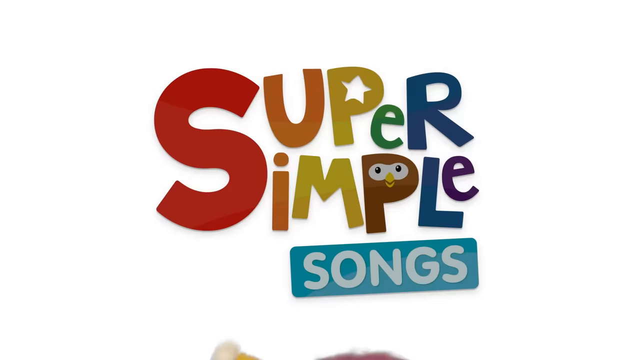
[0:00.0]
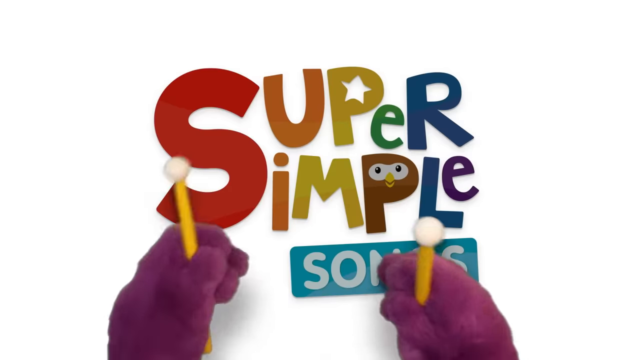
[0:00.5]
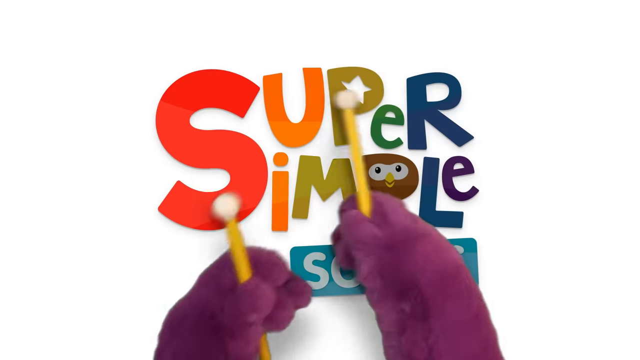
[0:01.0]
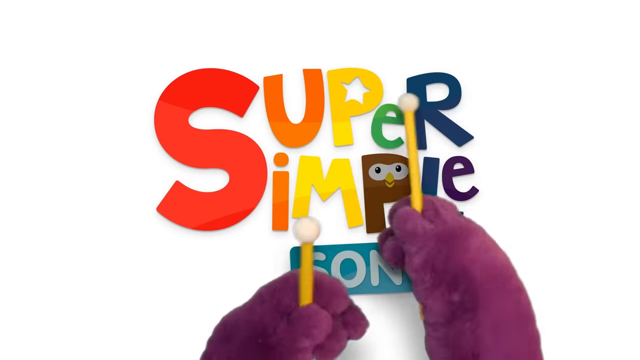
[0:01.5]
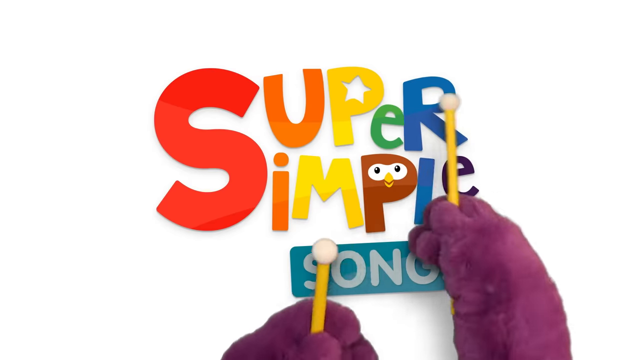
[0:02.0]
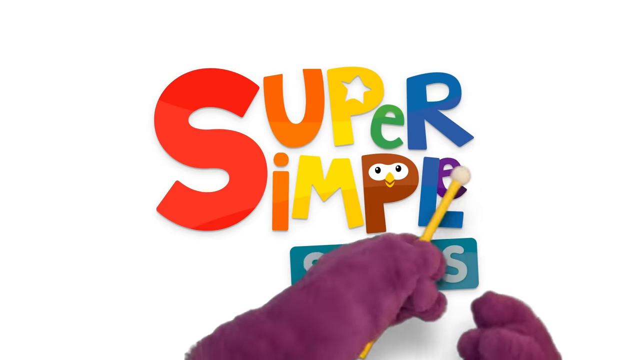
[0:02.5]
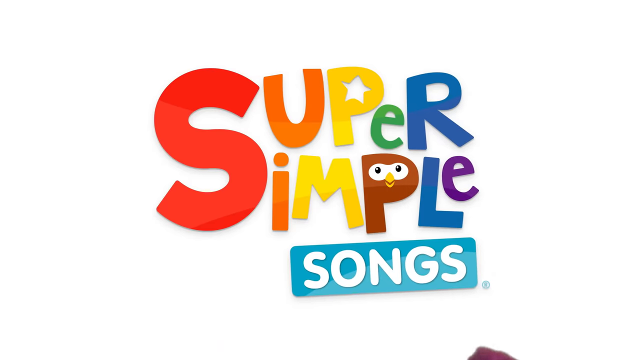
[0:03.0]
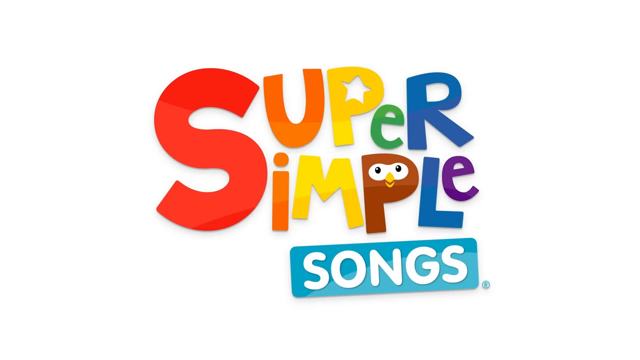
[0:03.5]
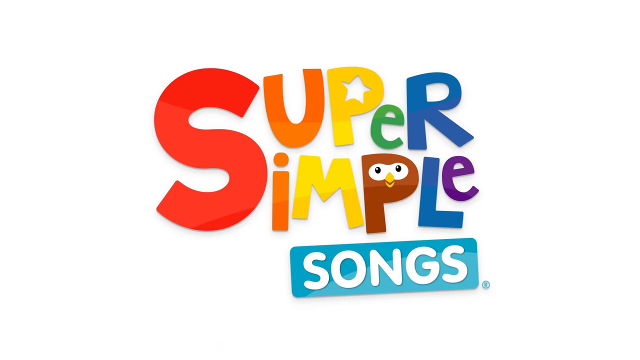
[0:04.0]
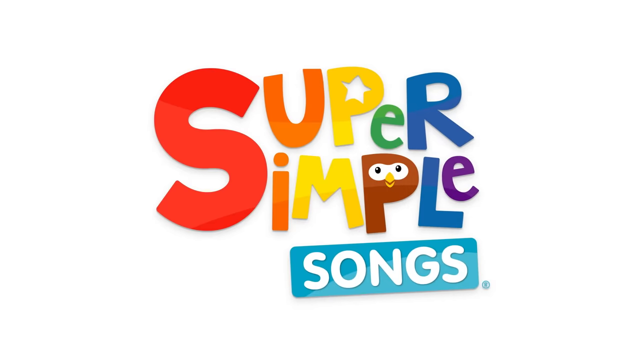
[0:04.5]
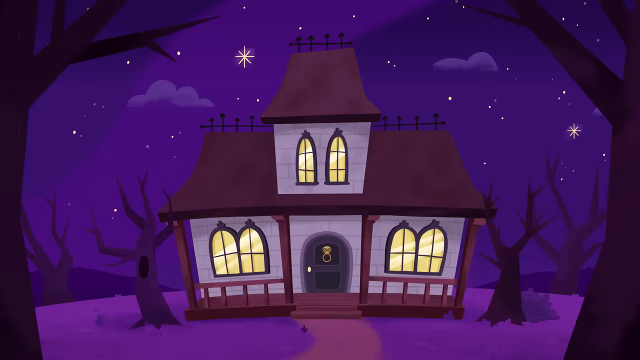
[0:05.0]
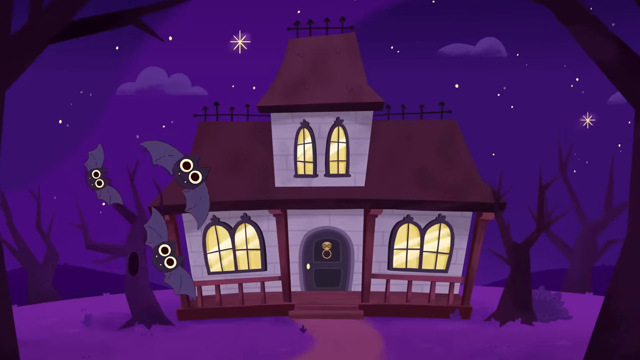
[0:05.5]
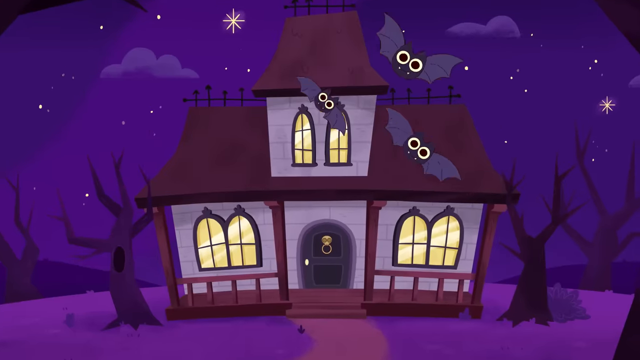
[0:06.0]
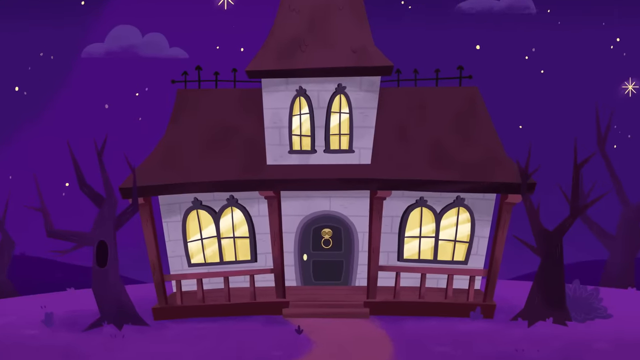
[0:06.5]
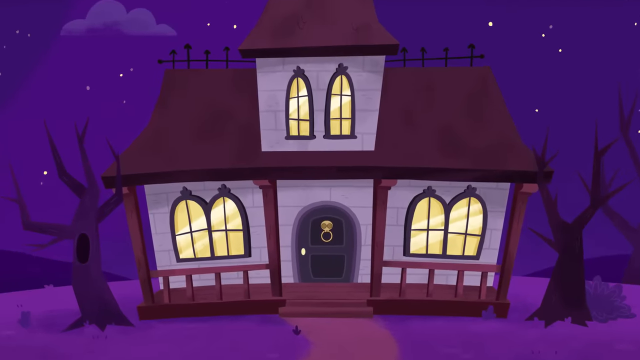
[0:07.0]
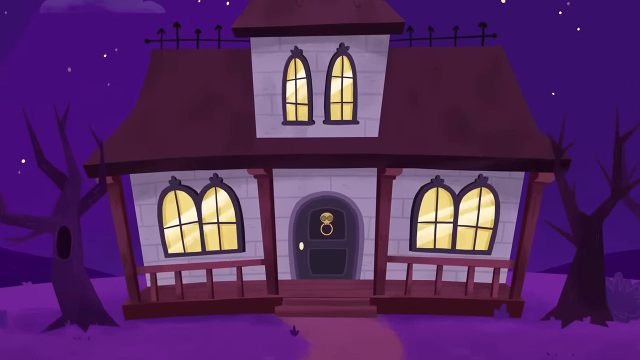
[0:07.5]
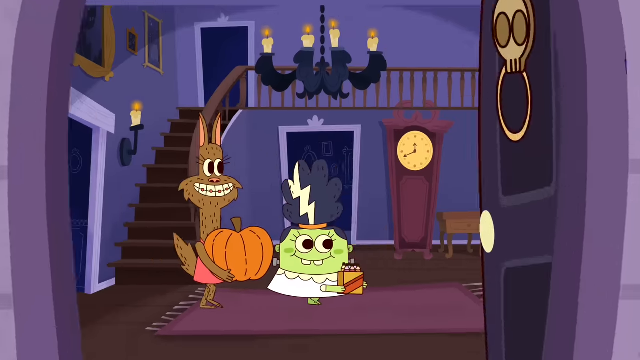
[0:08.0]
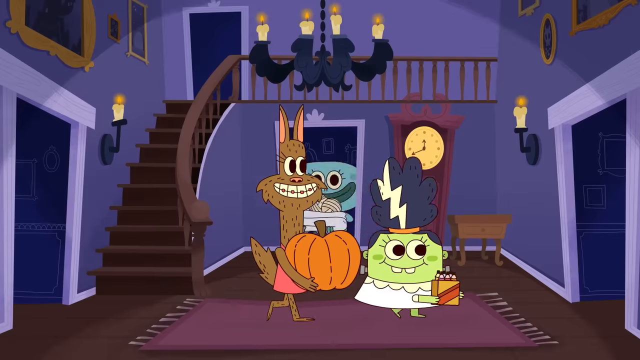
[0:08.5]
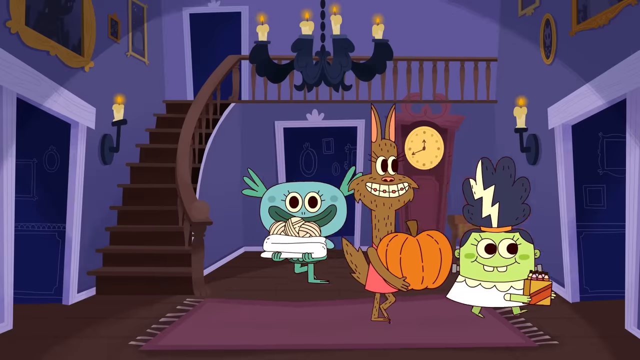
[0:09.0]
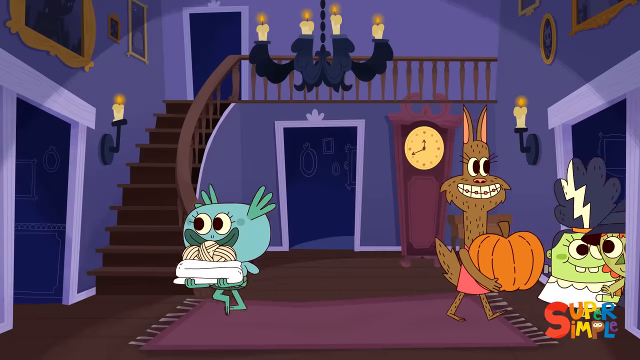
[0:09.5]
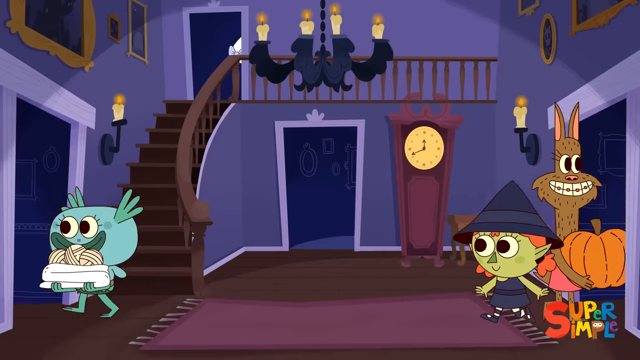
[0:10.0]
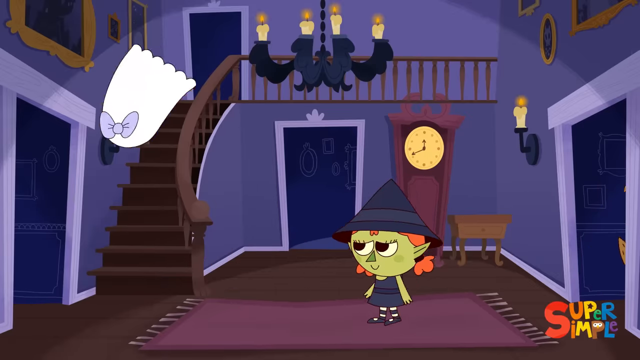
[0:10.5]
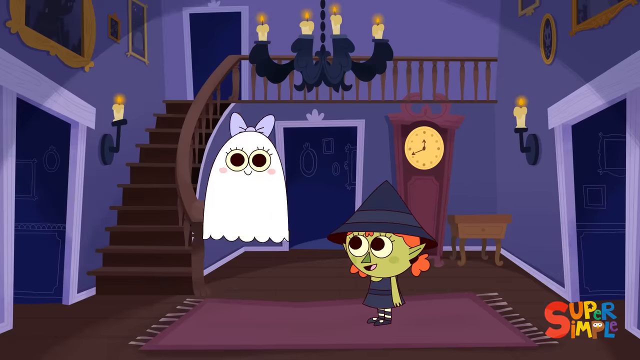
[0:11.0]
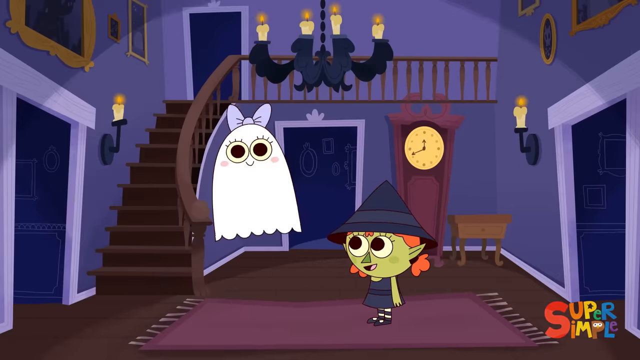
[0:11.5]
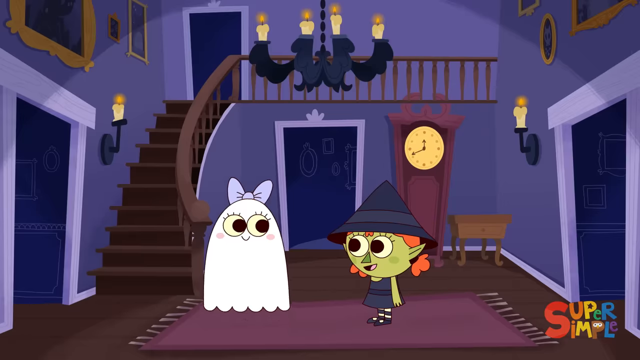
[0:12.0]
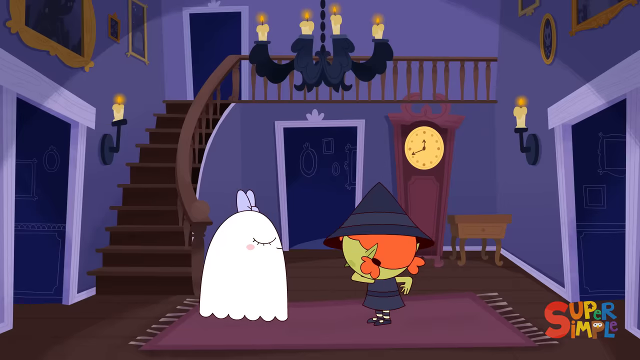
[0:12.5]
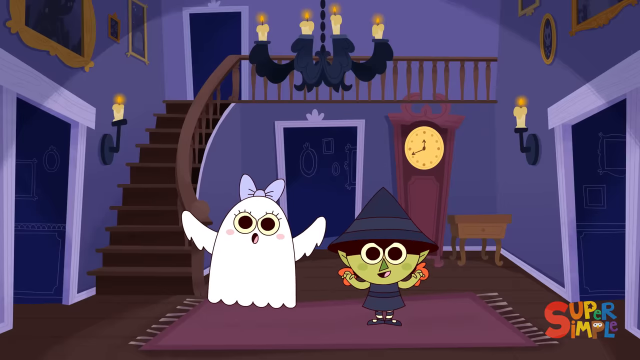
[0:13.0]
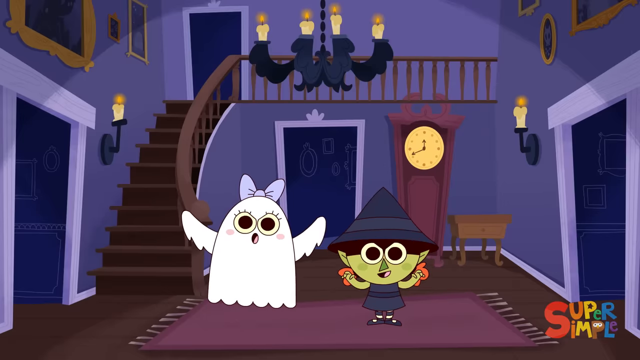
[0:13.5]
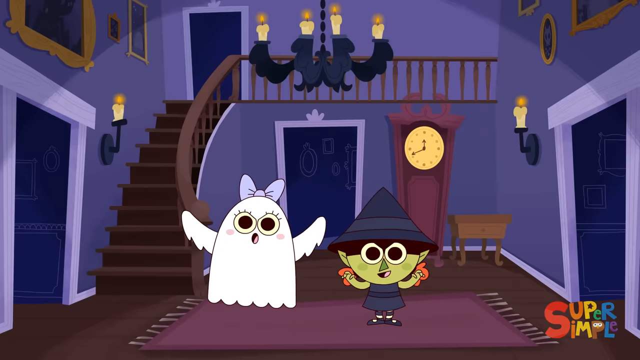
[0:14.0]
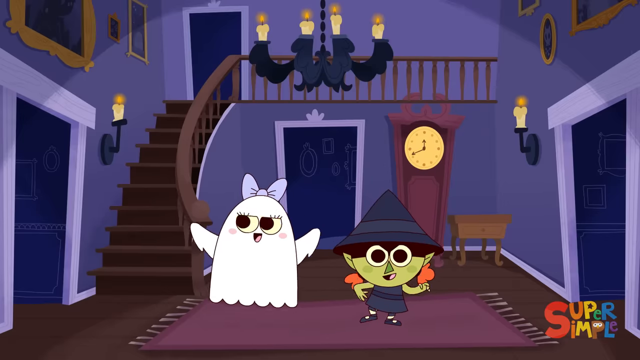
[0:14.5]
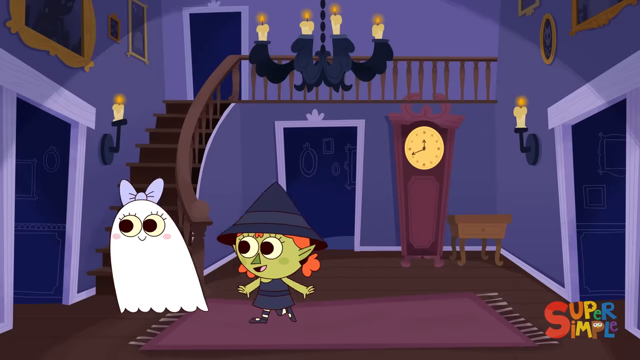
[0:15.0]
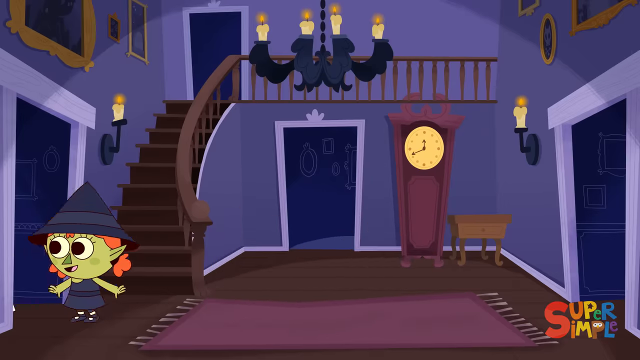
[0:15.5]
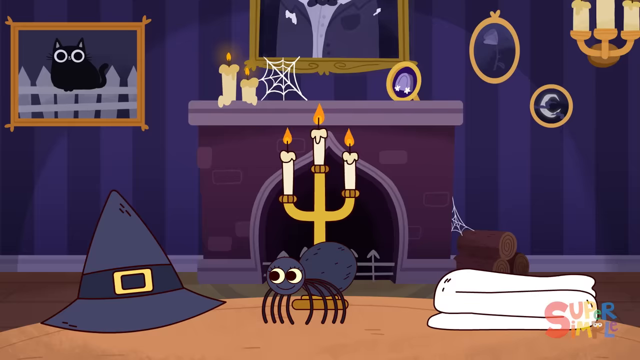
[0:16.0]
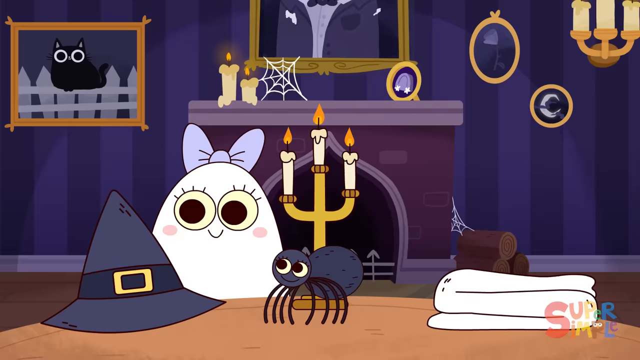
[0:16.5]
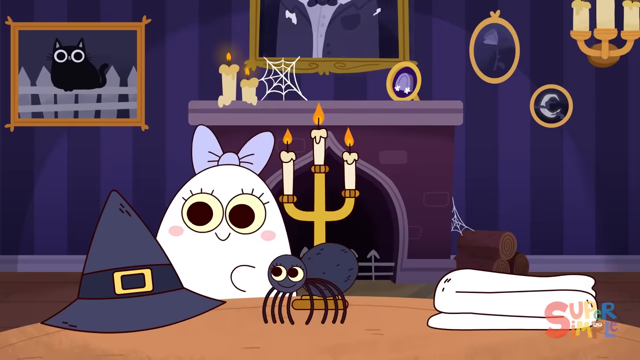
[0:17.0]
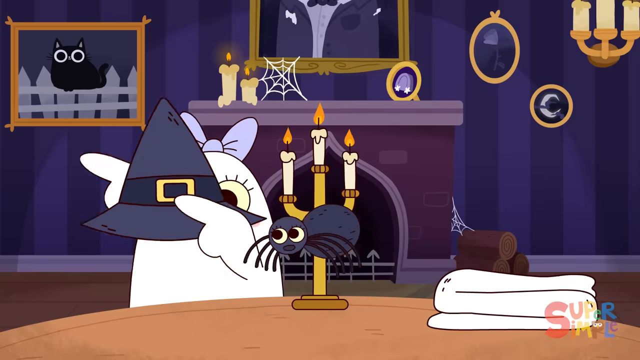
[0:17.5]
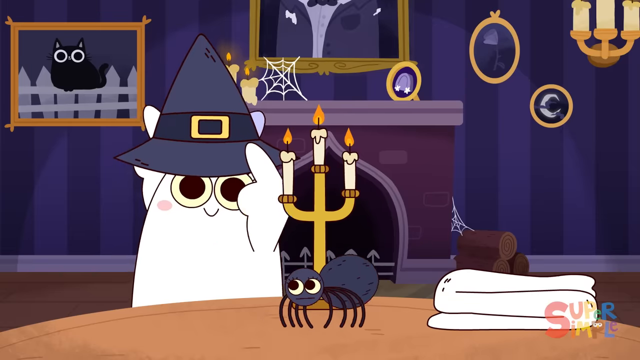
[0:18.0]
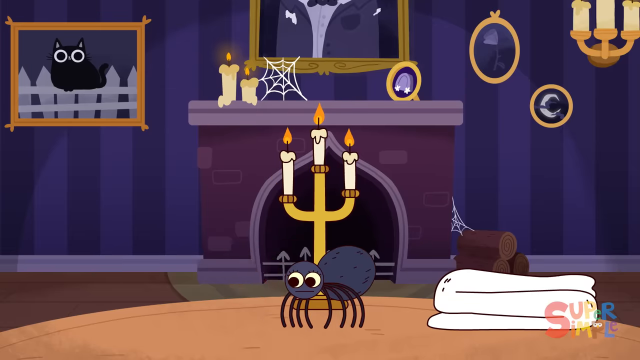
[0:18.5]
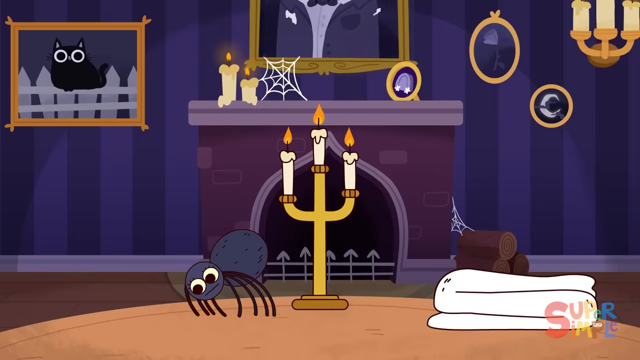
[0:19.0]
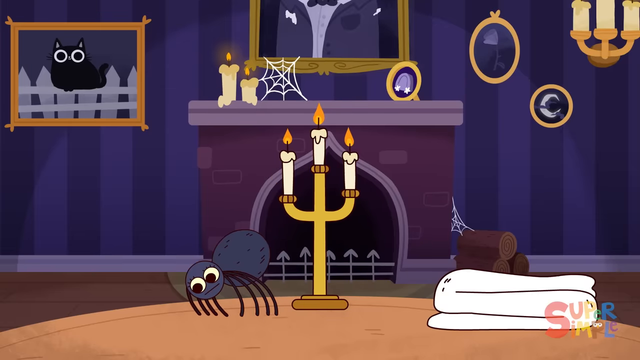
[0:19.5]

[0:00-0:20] The video appears to be animated. It opens with multicolored text reading "Super Simple Songs." The hand of a purple creature, like a mascot, plays xylophone sticks, hitting each letter so that the text lights up as if buttons are being activated. The first shot is of a spooky-ish house with a lot of purple colors at night, viewed directly from about 20 yards away. The animation style is a very classic cartoon style, kind of 90s-style. The camera zooms in and enters the house, where multiple characters race by, sometimes stopping to acknowledge the camera or viewer. There seem to be a witch, a ghost, other Halloween-type animals, and a Frankenstein-type creature.